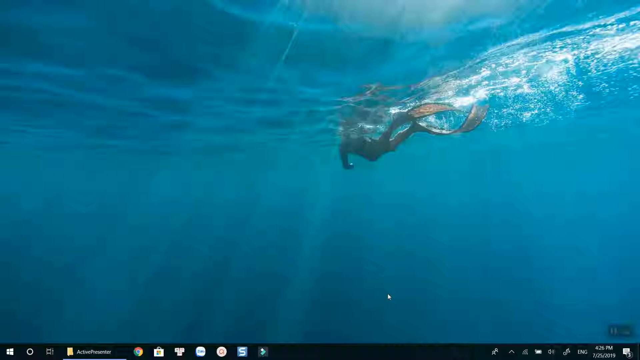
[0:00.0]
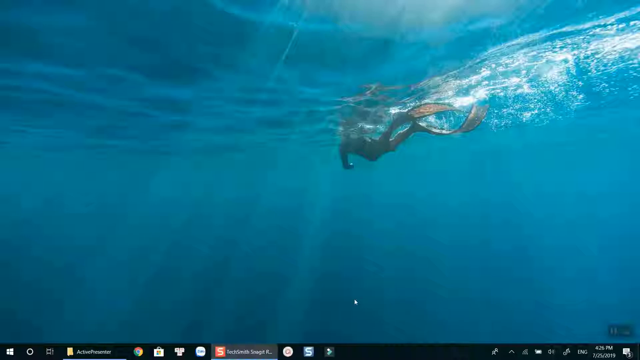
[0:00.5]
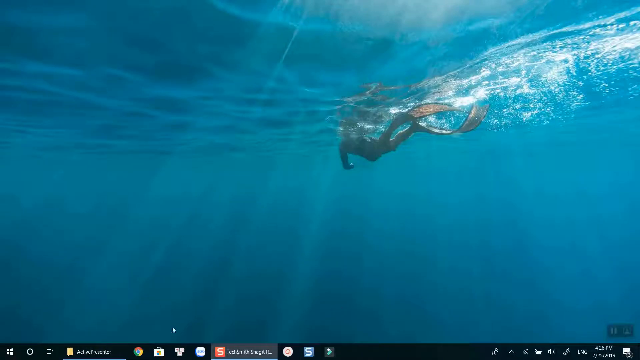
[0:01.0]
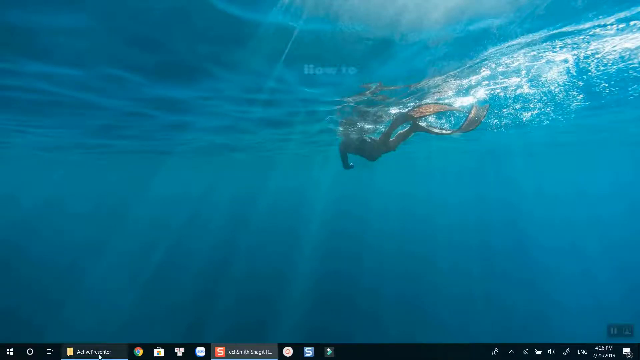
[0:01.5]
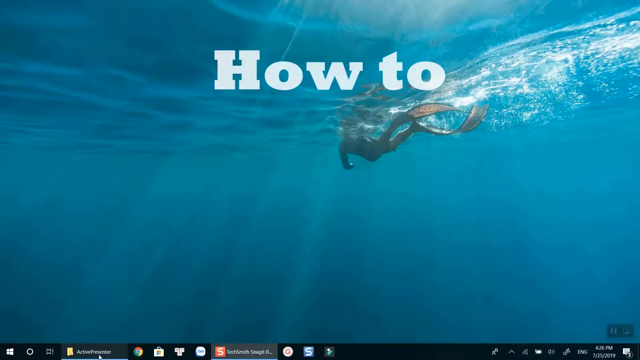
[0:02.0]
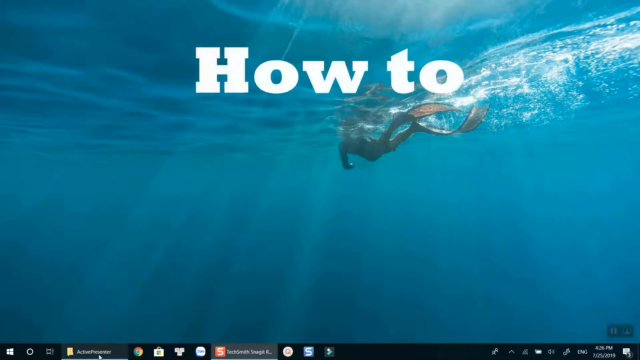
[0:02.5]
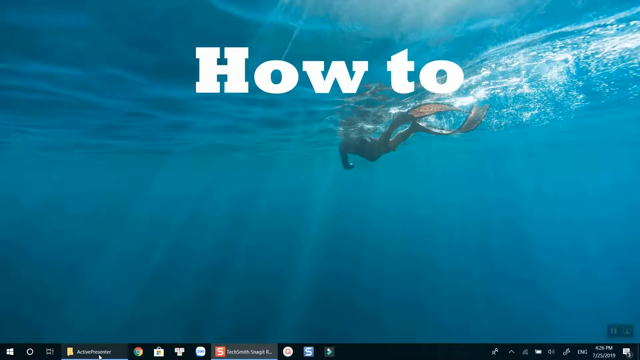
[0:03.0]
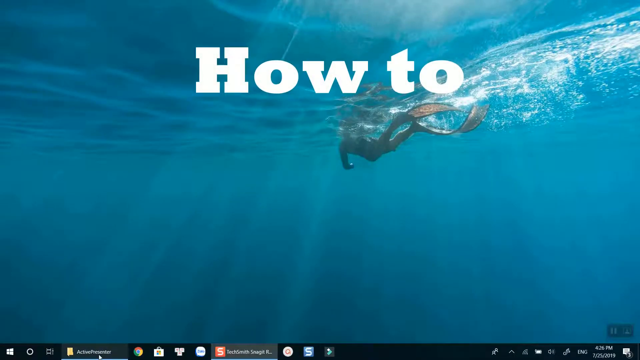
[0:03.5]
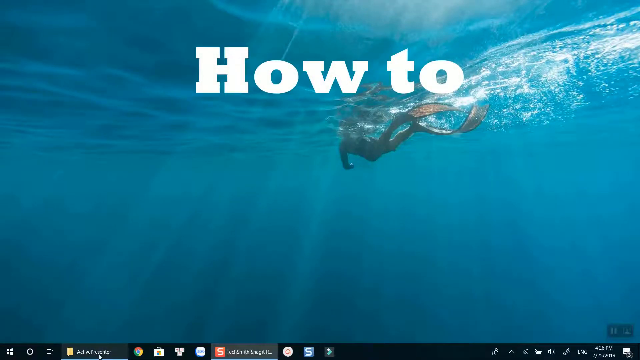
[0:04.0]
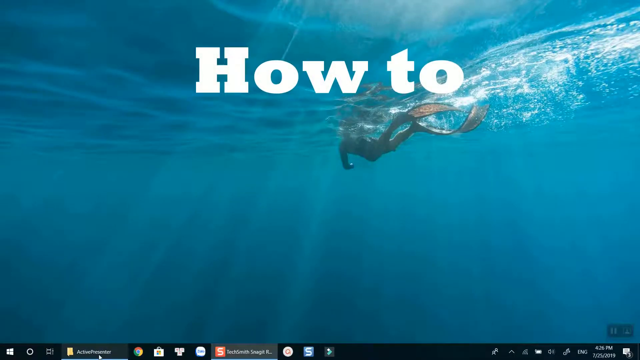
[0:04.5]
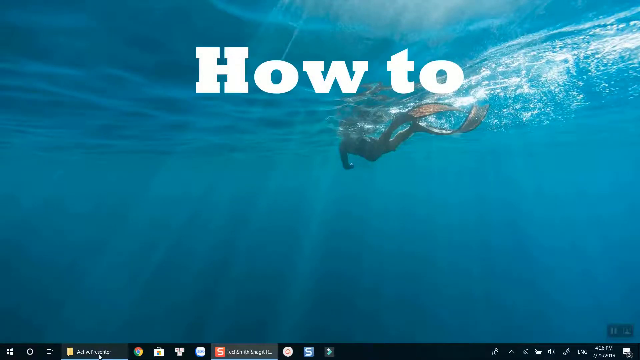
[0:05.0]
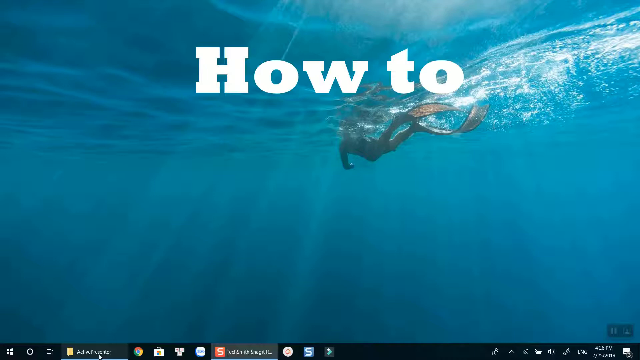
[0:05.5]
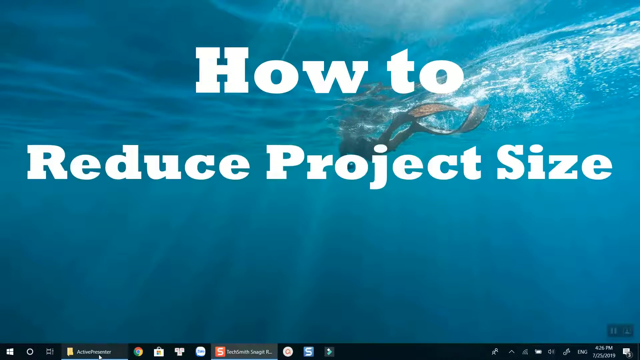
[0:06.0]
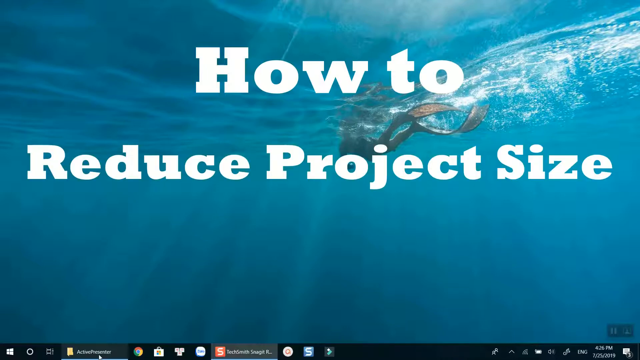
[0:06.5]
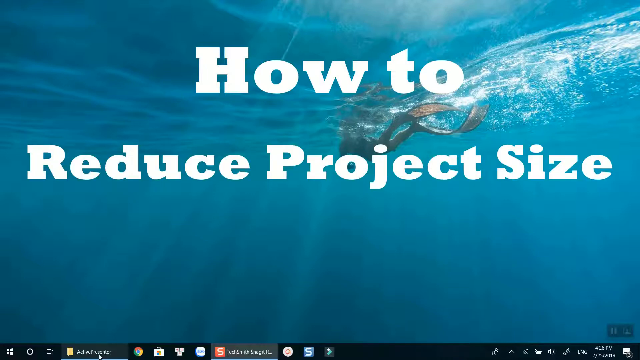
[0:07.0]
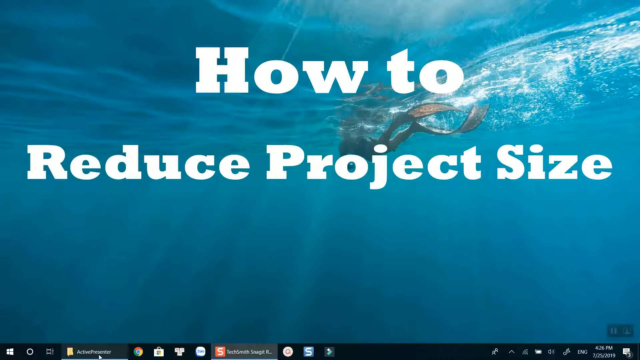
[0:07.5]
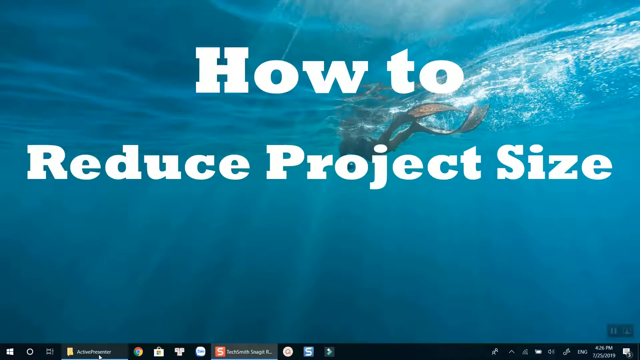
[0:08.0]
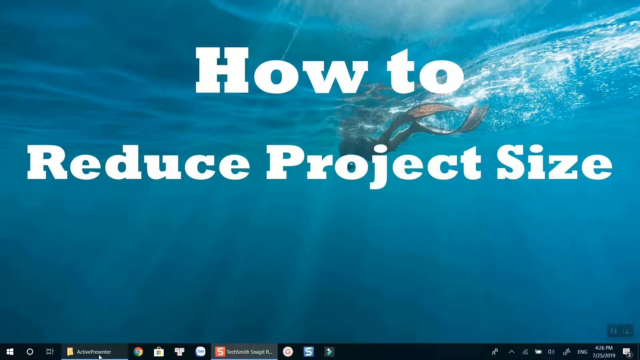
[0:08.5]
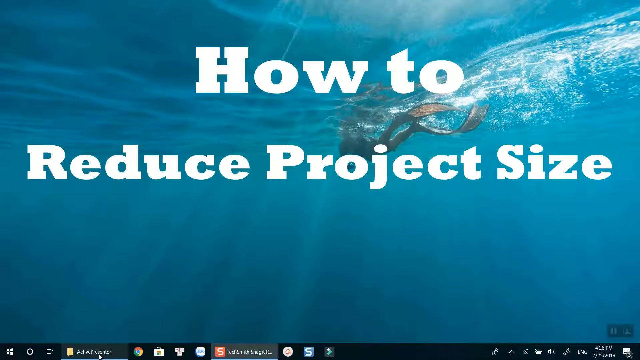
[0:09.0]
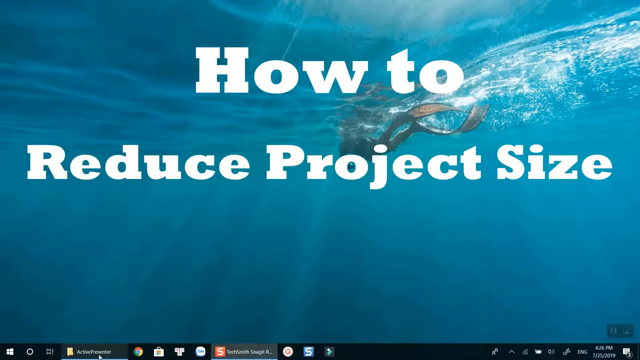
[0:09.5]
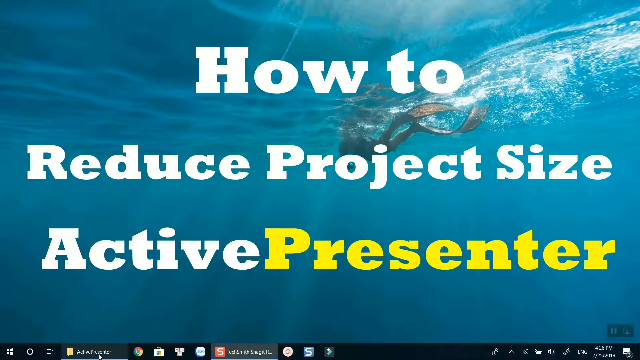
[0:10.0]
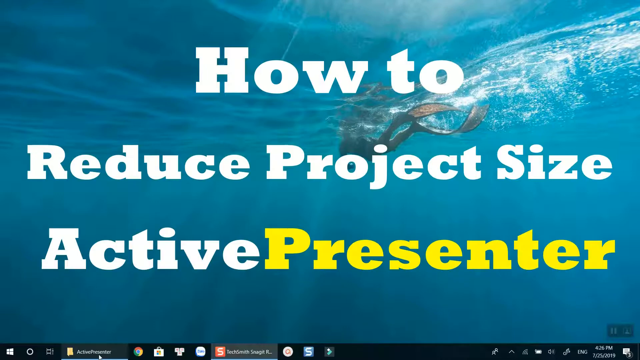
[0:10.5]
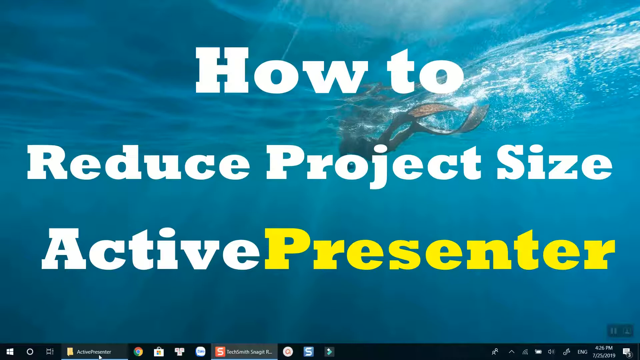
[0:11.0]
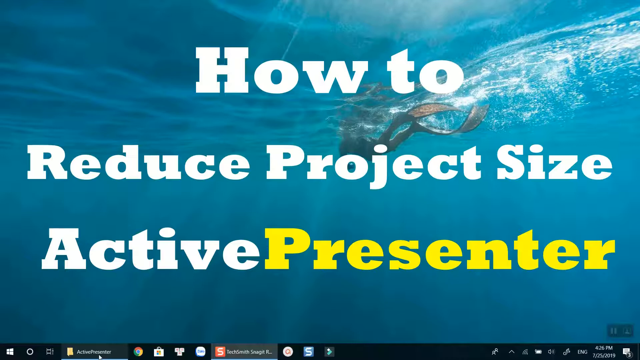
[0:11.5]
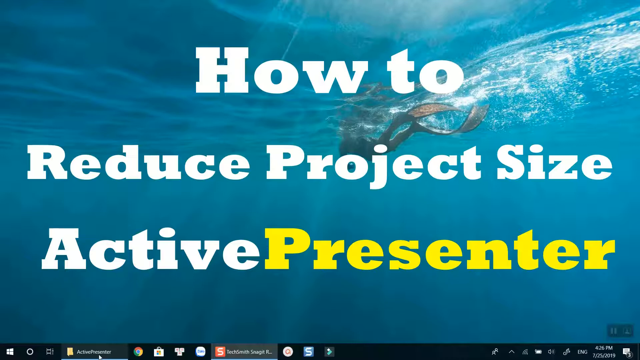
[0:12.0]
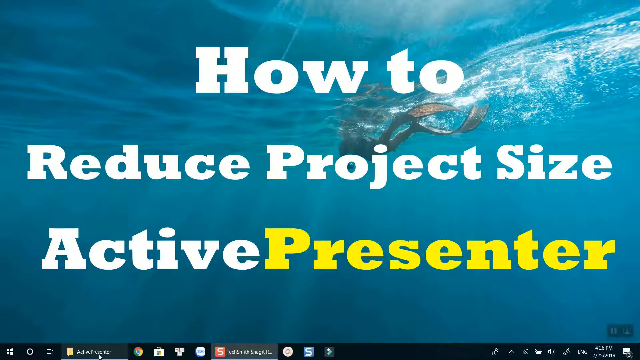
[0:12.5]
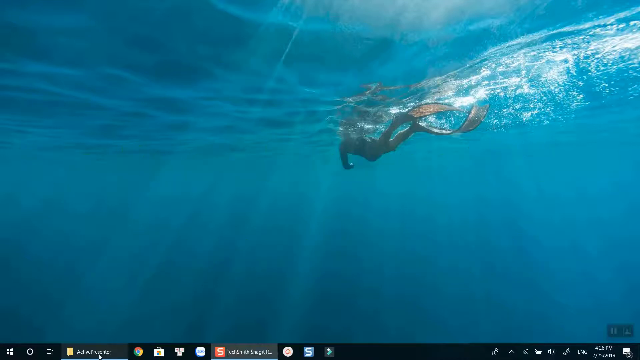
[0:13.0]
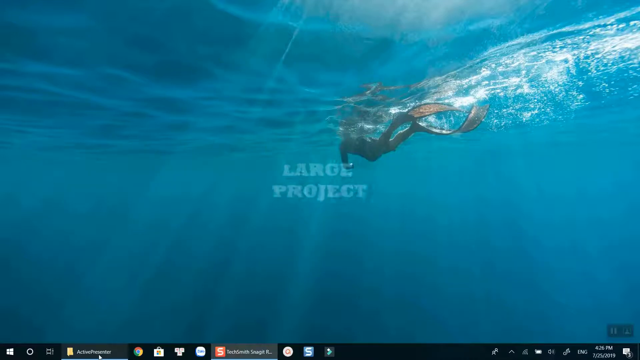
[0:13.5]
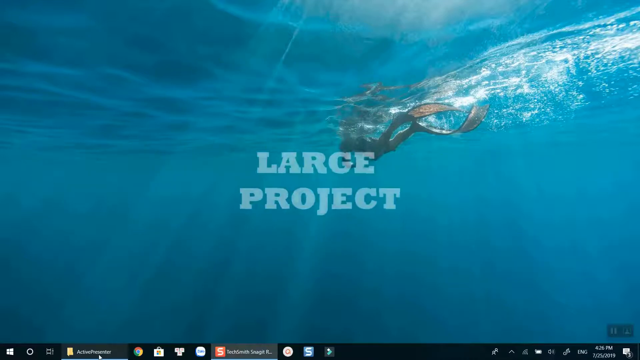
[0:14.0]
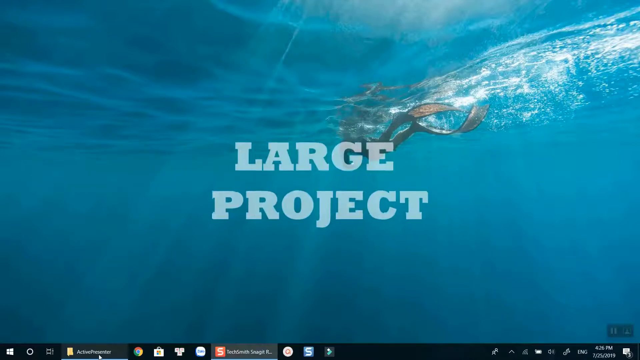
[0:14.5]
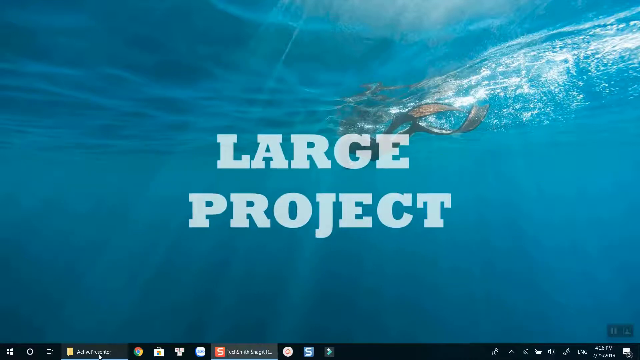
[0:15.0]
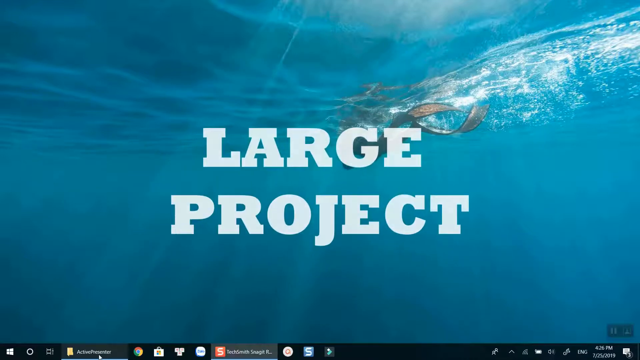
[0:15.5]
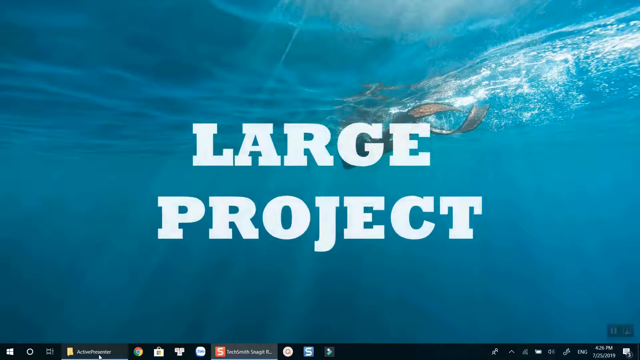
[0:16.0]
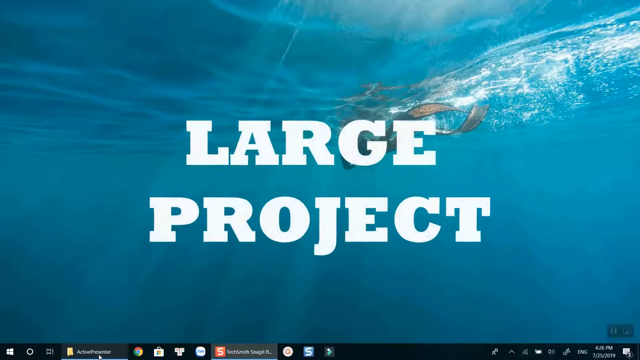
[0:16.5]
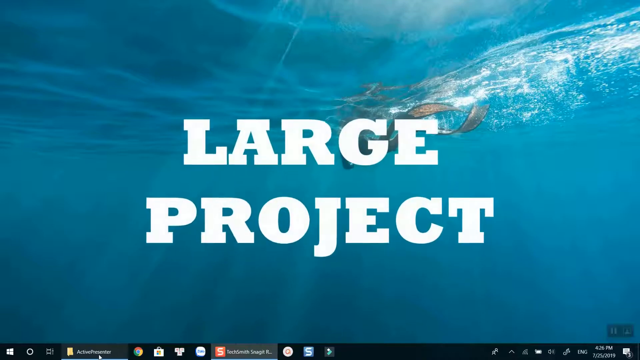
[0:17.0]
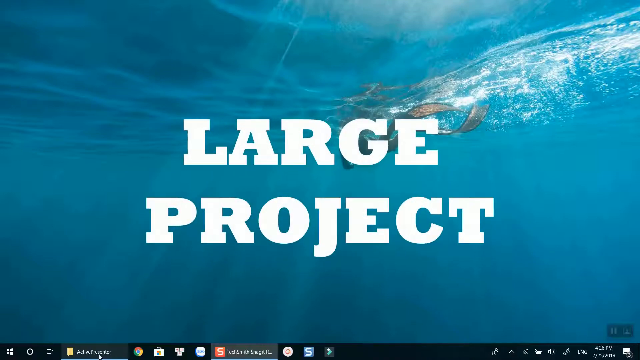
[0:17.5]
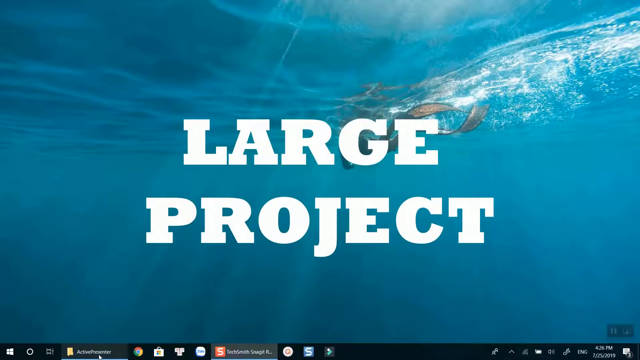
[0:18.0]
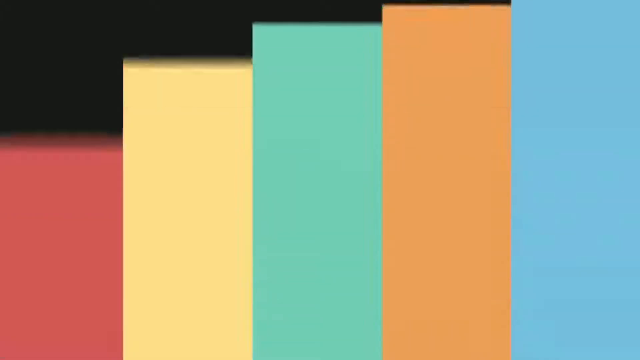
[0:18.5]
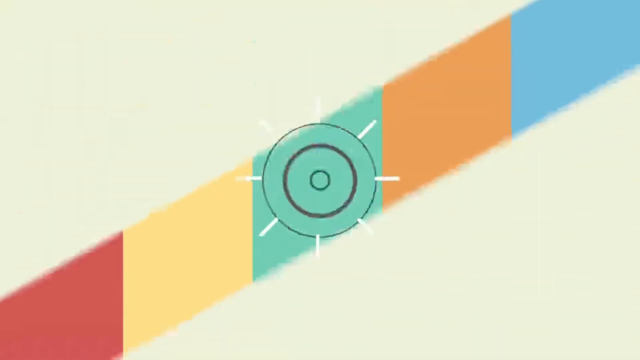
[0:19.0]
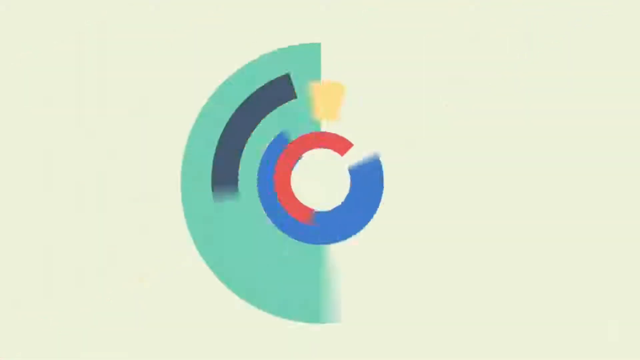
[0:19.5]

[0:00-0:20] A computer screen appears with a taskbar along the bottom holding some icons. The background image shows a diver underwater, surrounded only by medium dark blue water. The diver swims rather close to the surface, wears long orange fins, and looks like they are not wearing a long wetsuit. Bold, large white letters read "how to reduce project size, active presenter," with the word "presenter" in yellow. That text goes away and the words "large project" pop up. Five strips of color then come onto the screen: light blue on the far right, then orange, light green in the middle, dull yellow to its left, and red to the left of that. A circle with two smaller circles inside and a few short white stripes on its edges appears. The screen then turns a cream color and reads "Jackie's tutorial," with a picture of a light bulb below it.